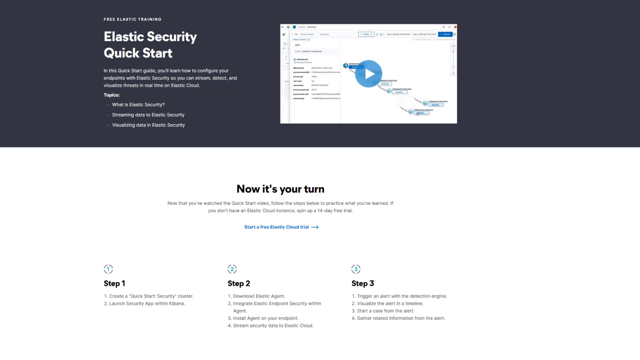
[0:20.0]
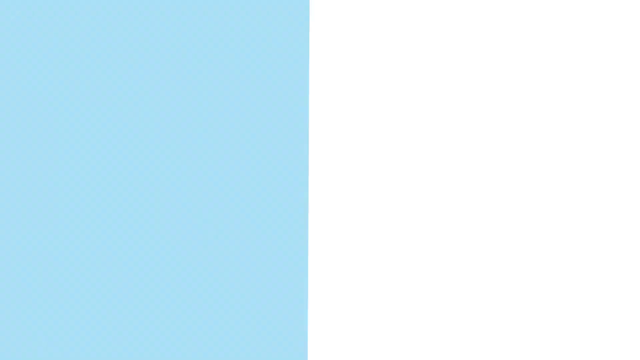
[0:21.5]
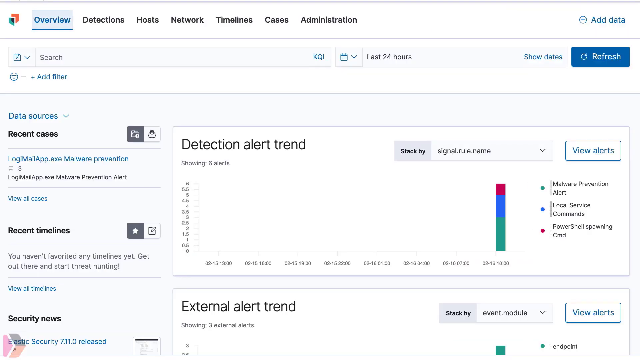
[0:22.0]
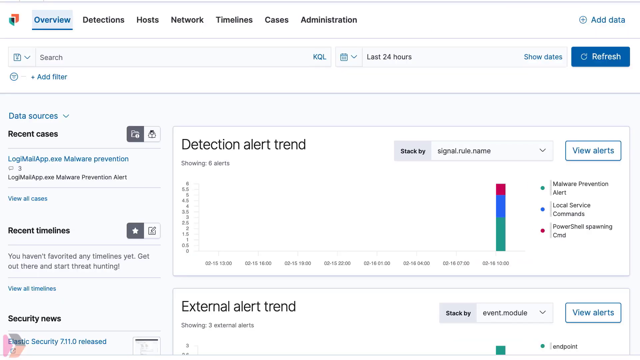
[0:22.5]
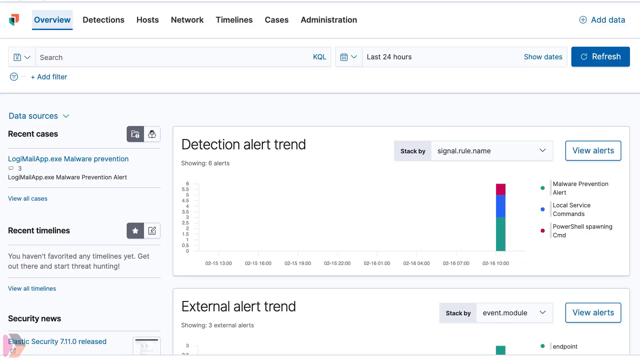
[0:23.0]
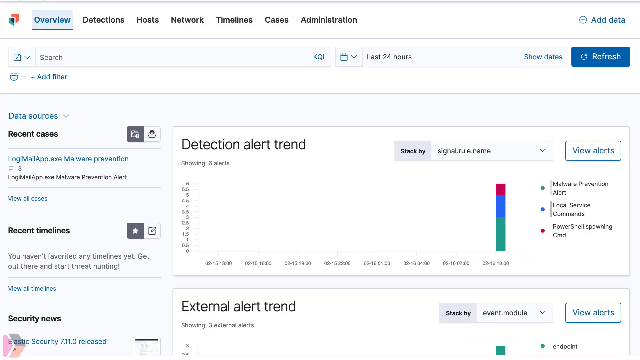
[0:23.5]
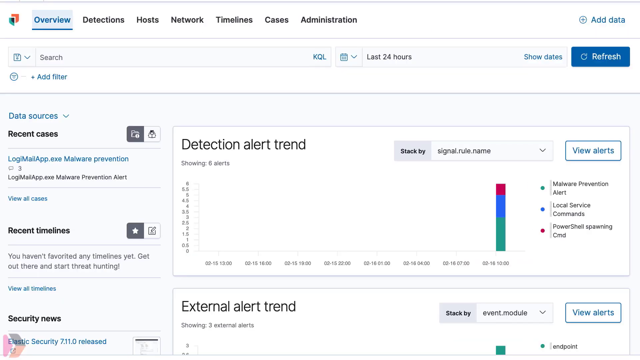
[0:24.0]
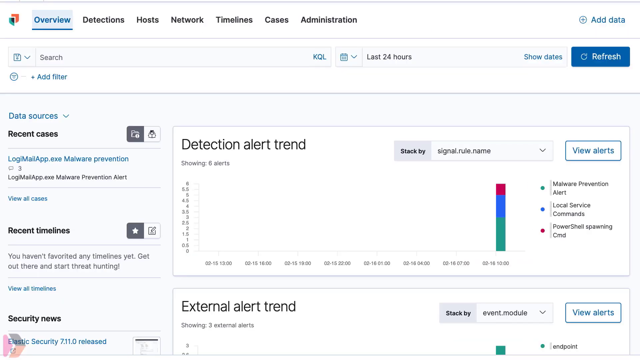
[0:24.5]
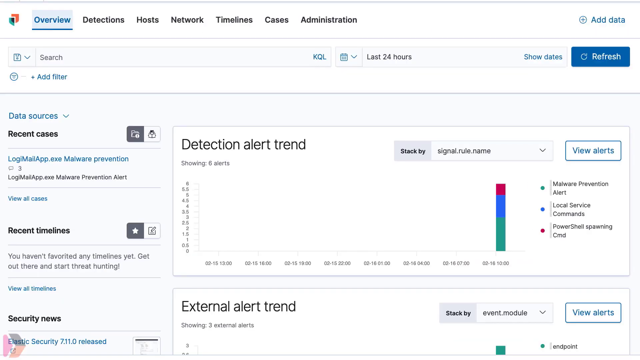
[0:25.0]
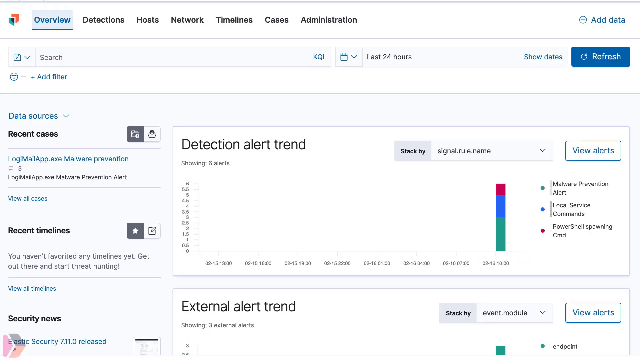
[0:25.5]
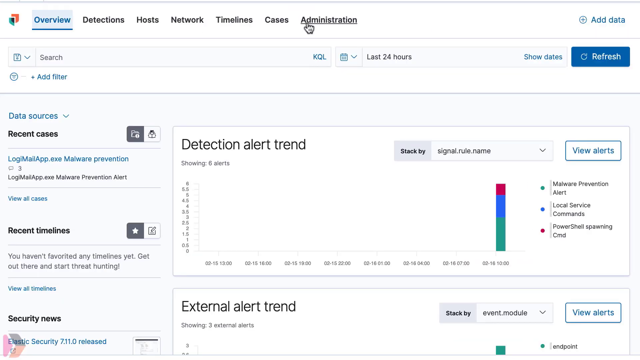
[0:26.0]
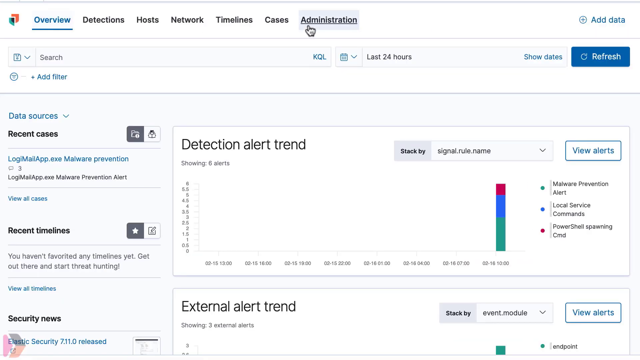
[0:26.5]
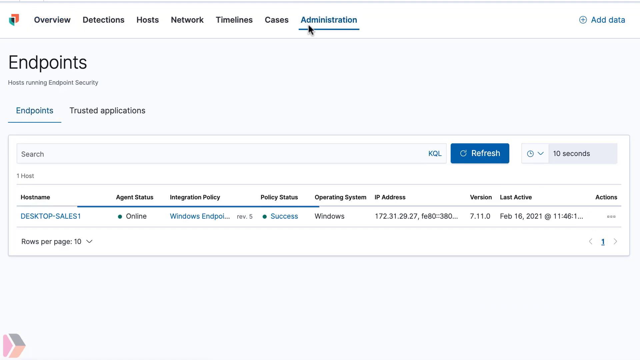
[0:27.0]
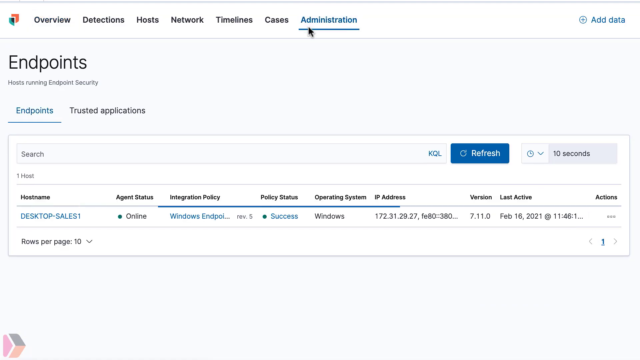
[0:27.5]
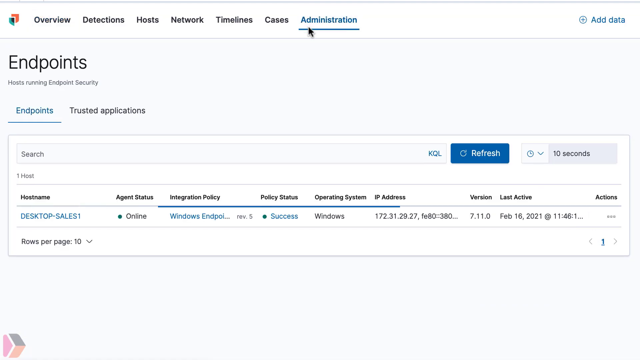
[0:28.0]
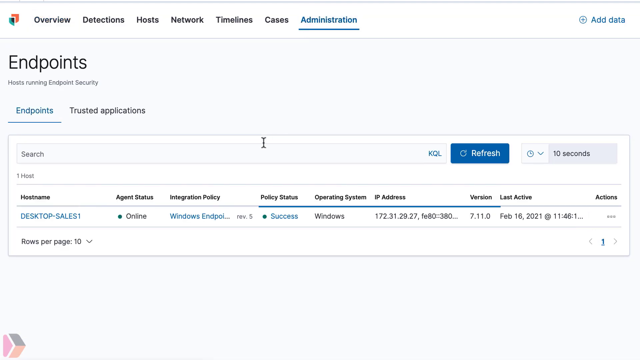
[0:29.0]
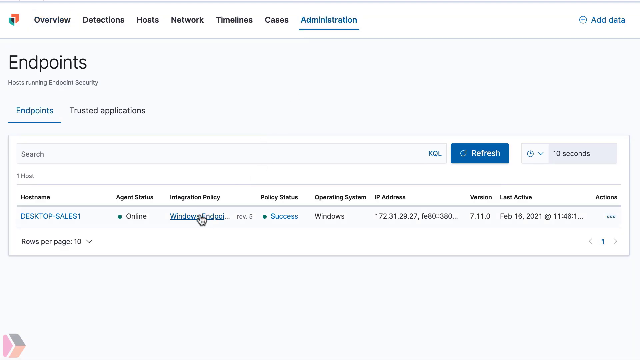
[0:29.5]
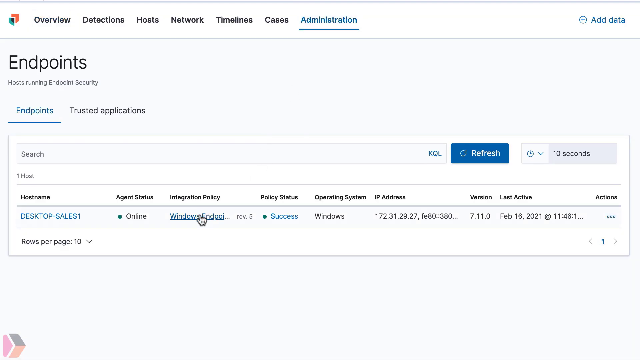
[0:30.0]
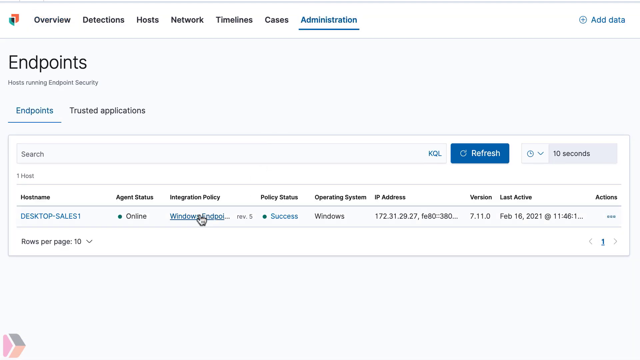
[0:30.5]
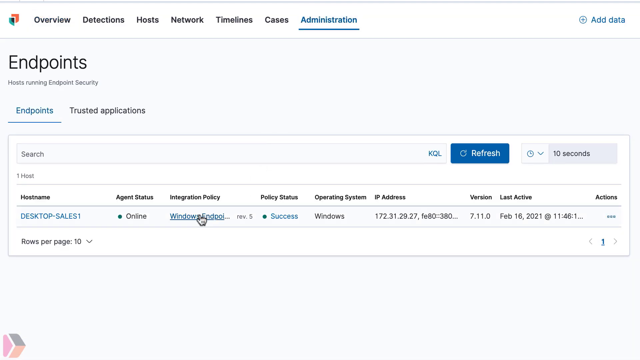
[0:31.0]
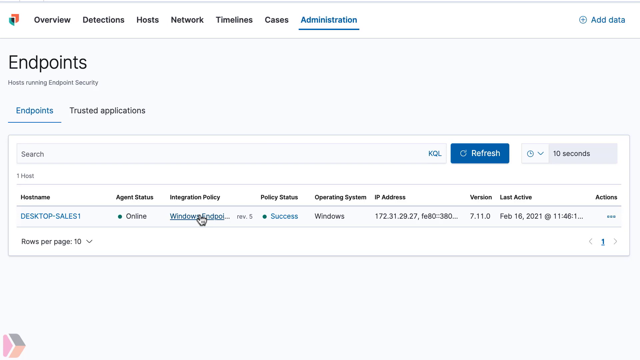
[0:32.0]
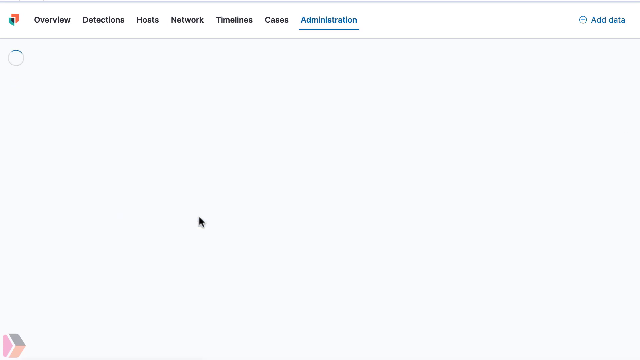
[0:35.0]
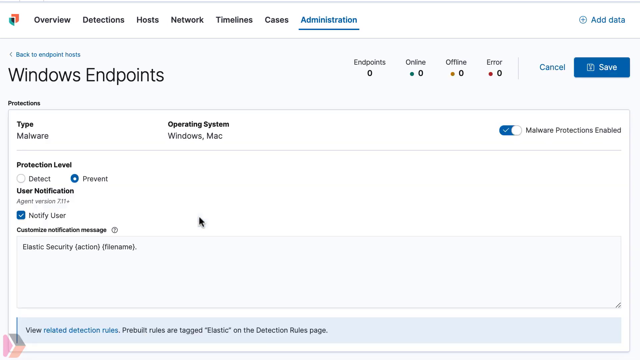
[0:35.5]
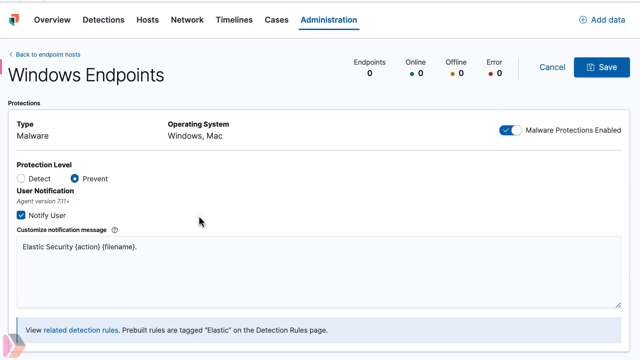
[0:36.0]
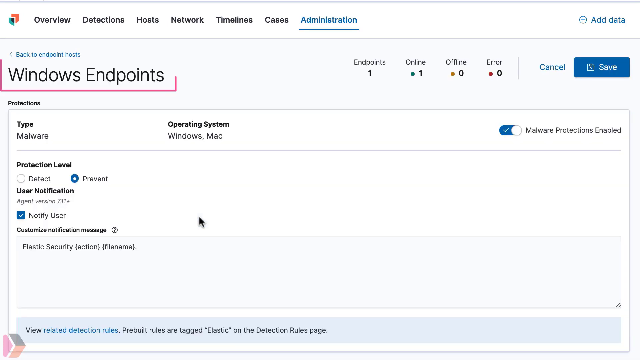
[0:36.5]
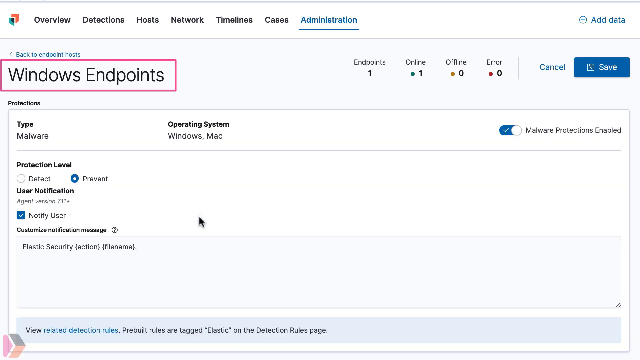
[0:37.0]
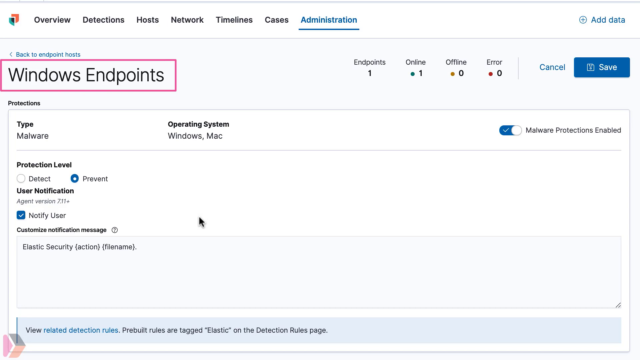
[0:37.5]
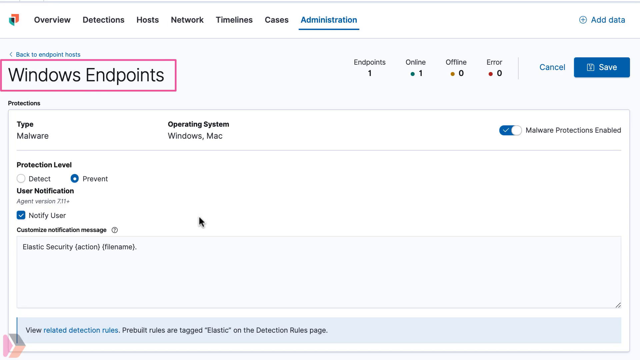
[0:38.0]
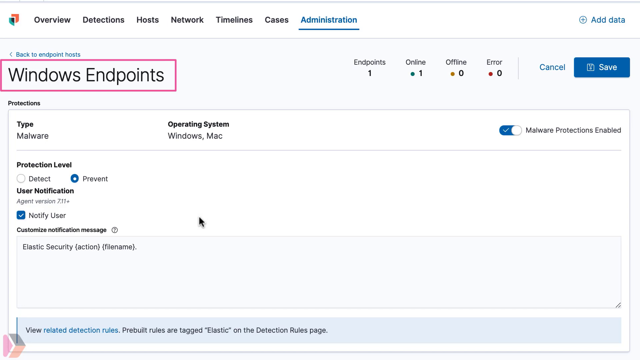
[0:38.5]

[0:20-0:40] The view moves over to the tab labeled "overview". Under it is a row of smaller lines with a search bar, "ad filter" and "last 24 hours", with "refresh" on the left side. Below that are "recent cases" and "data sources". Further down is "recent timelines" with a little star beside it and another box beside that, which looks like a box with a line through it. To the right, in a larger box, is "detection alert trend", with "stack by" and a dropdown box. To the right is "view alerts", with multiple colors on the right of the screen. The arrow goes back and clicks the administration tab, which shows "endpoints", "trusted applications" and a search line. To the right is a blue refresh box, and to the right of that, "10 seconds". The host "desktop sales" is shown in blue, and the agent is online.